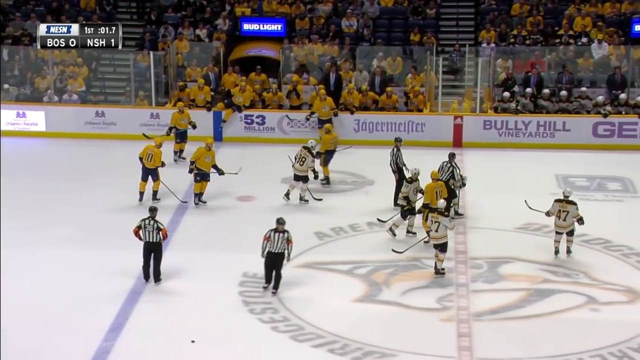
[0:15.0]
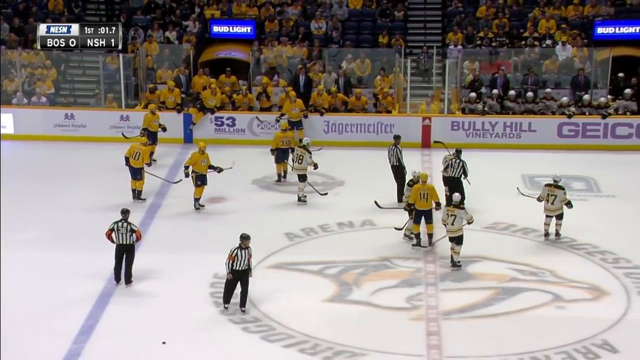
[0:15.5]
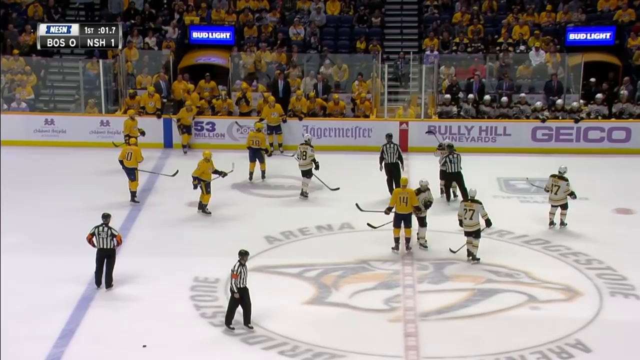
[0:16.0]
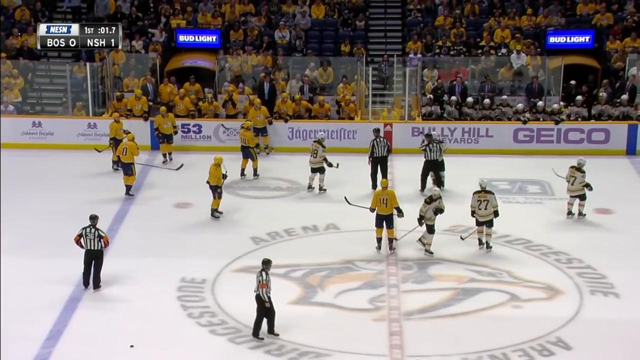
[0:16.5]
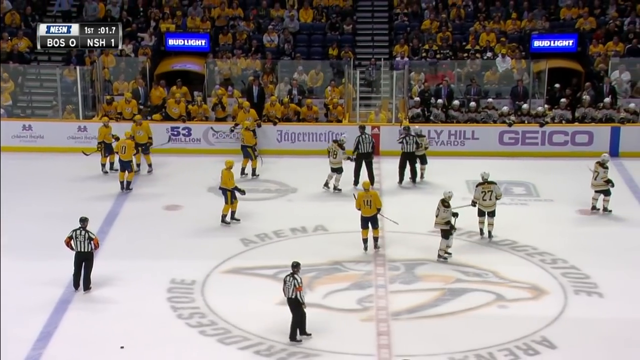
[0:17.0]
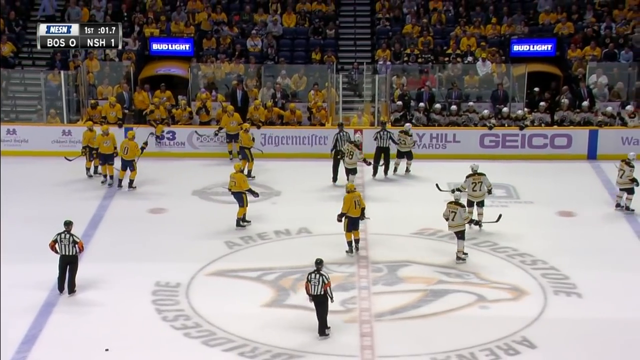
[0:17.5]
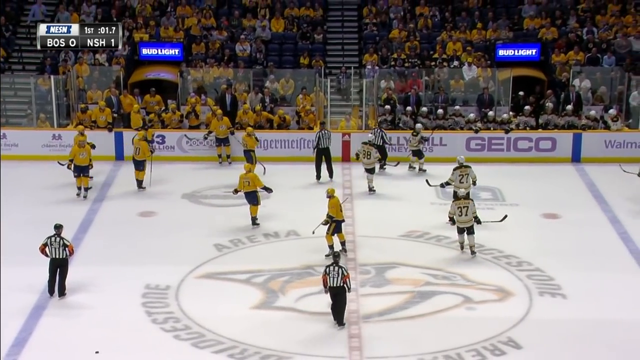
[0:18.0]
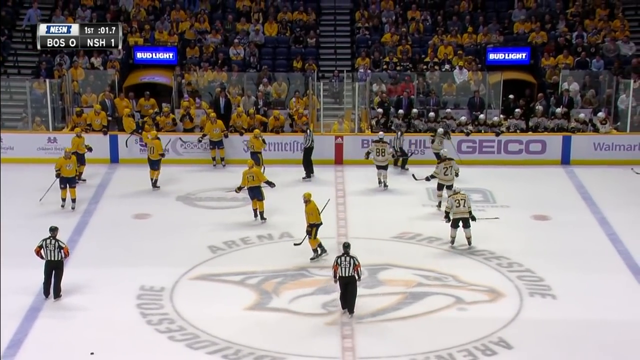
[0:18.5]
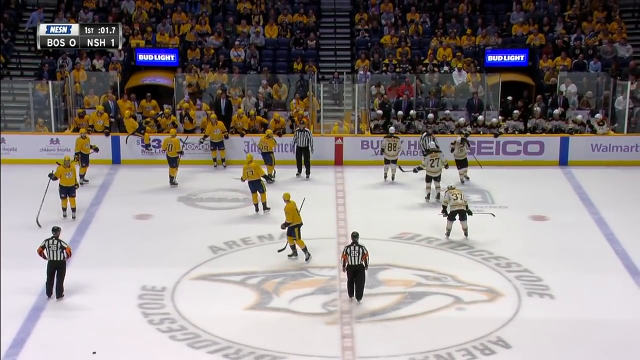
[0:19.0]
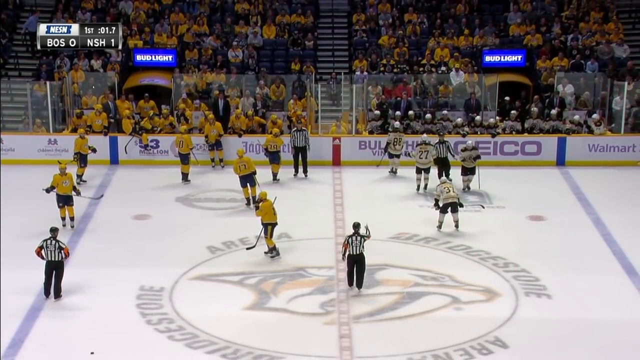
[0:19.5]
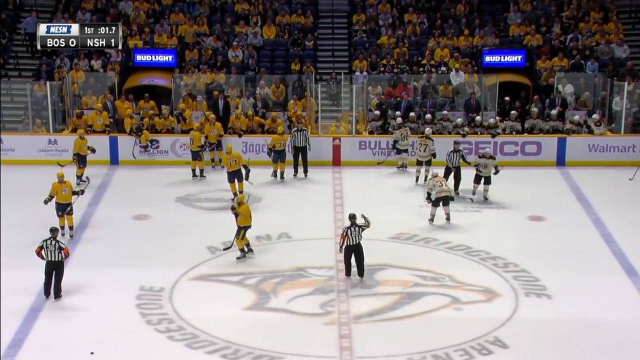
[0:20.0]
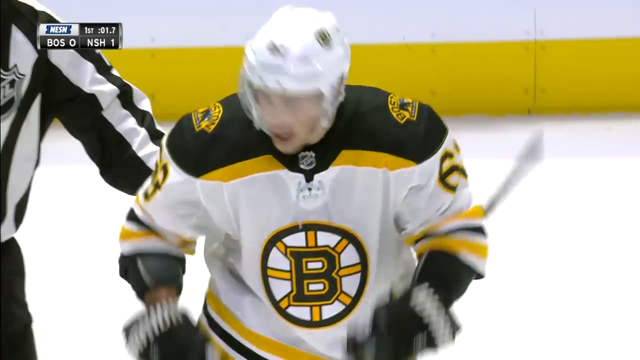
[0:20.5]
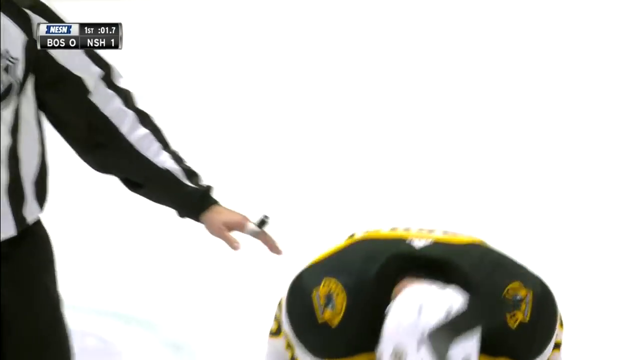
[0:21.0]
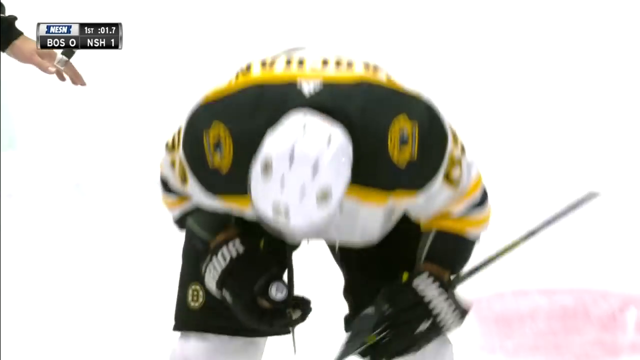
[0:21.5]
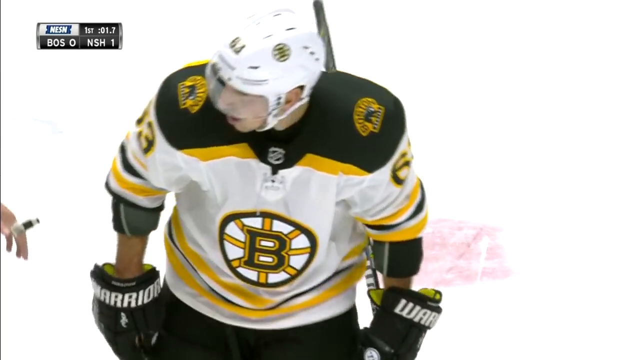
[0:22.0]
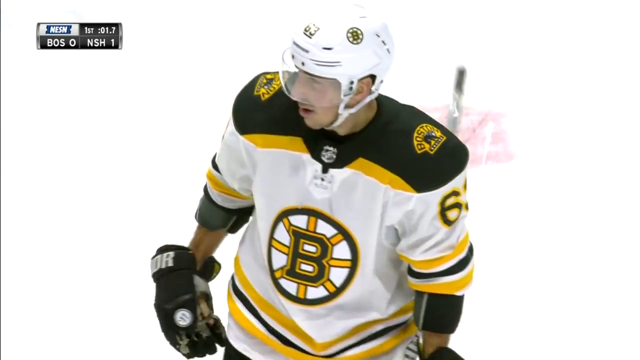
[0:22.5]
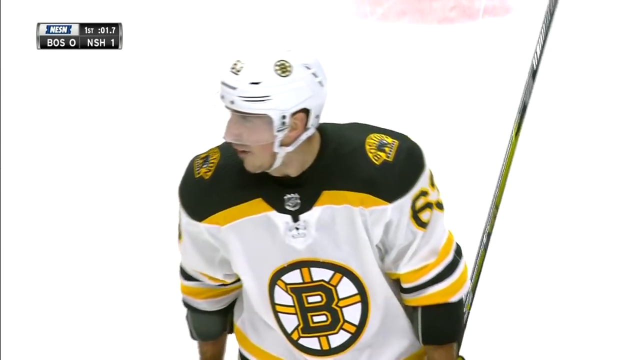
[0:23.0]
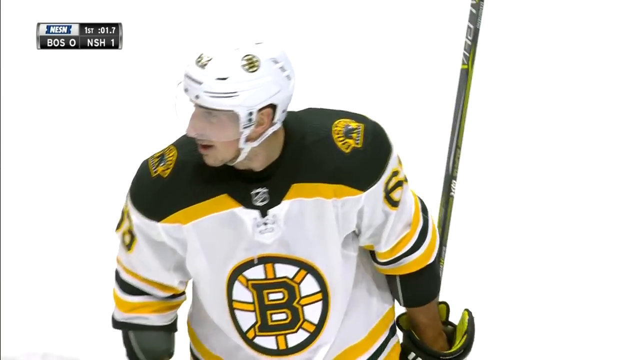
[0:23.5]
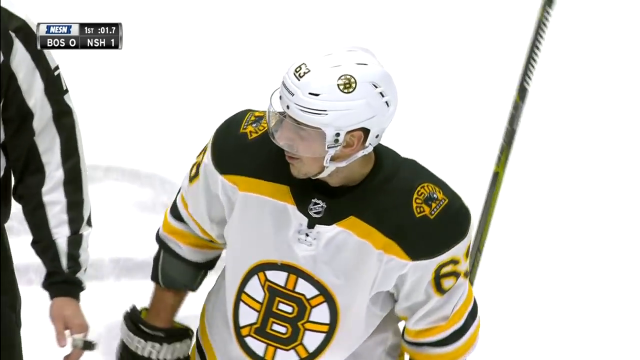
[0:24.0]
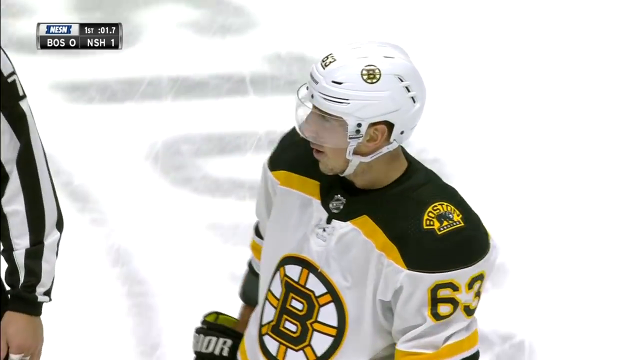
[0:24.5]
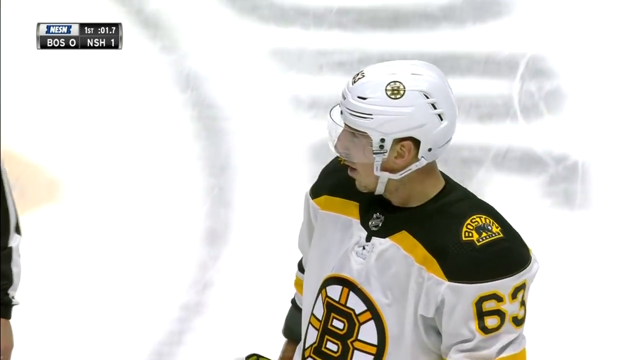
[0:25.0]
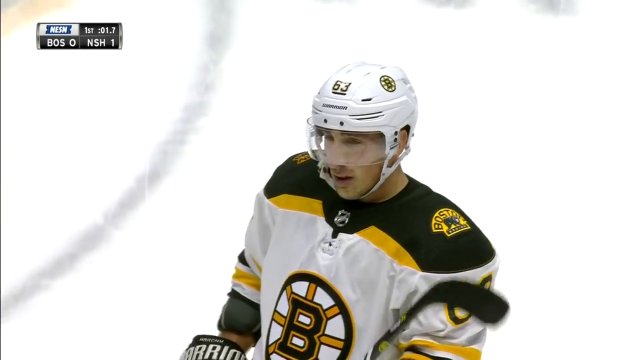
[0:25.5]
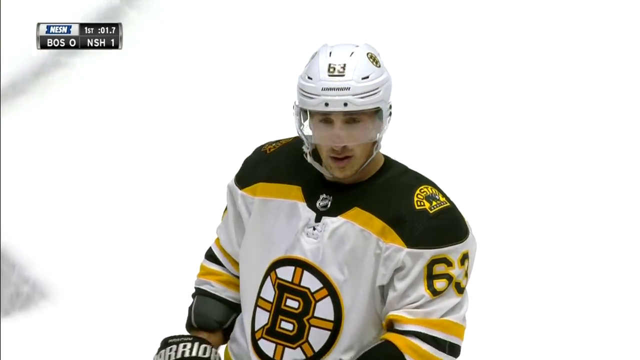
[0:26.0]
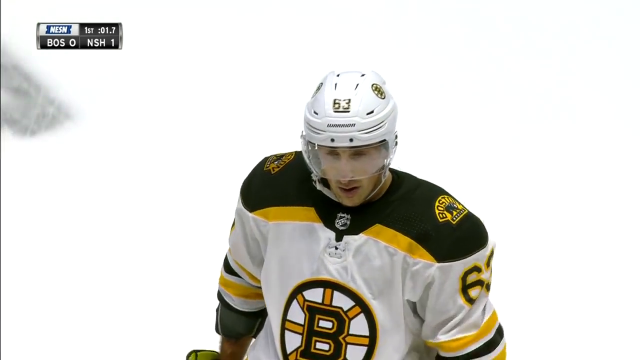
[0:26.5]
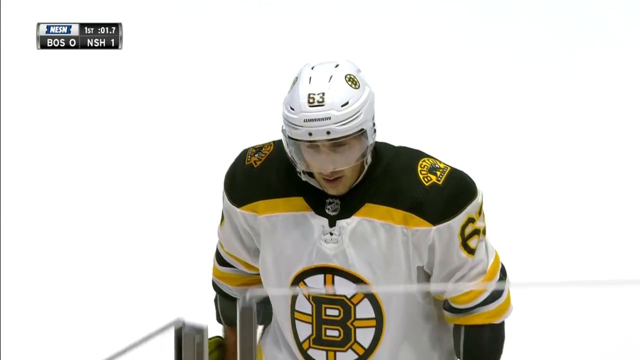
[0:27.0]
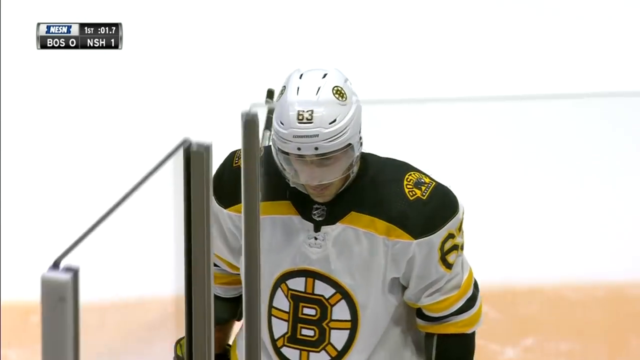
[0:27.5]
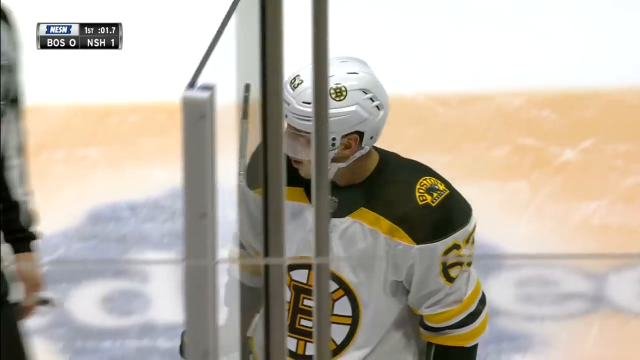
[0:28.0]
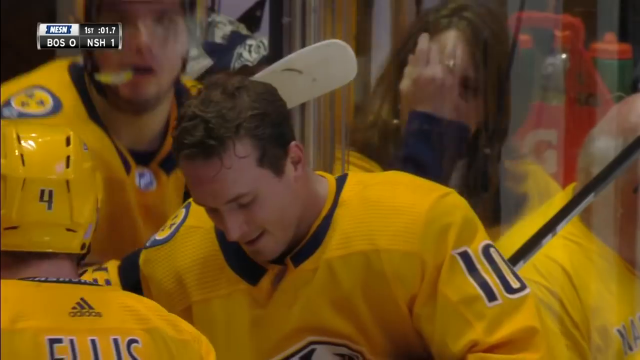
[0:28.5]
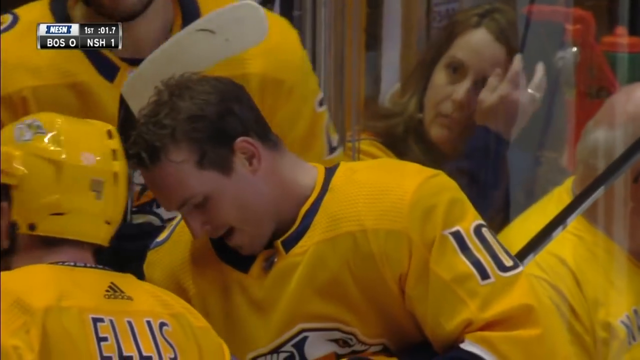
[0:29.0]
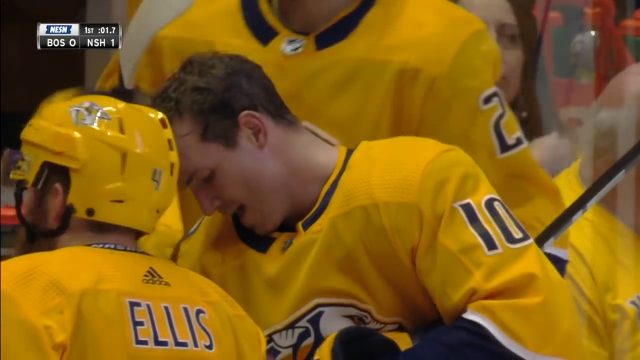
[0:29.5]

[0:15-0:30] The two referees skate around following the player in the black and white jersey, who is still grabbing at his head; it is unclear whether he is injured or doing it in frustration. His jersey has a letter B inside a wagon wheel on the front, its colors are black, yellow and white, it appears to say "Boston" on his shoulder, and he wears number 63. The floor of the arena appears to say "Bridgestone", and the white wall surrounding the rink carries logos from companies such as Geico, Walmart and others. In the background is a team box where the yellow team is sitting, with several players in it, and on the other side of that is a box where the players in white and black are sitting.